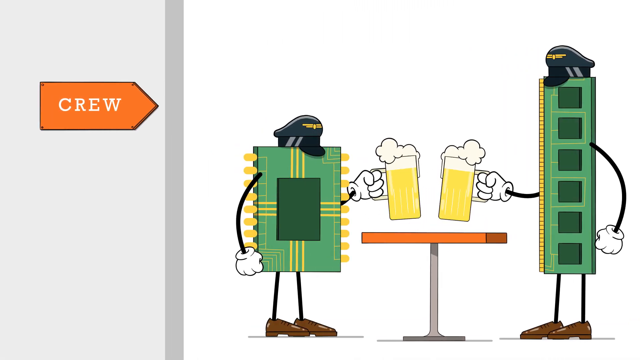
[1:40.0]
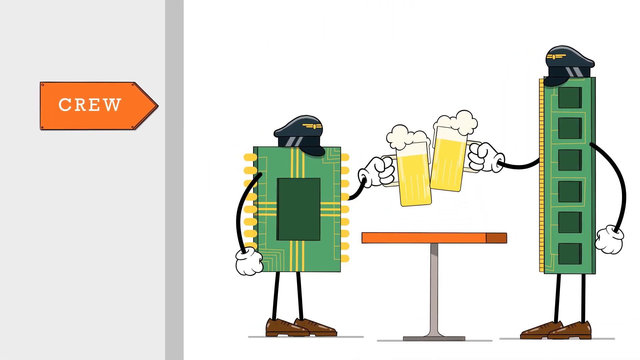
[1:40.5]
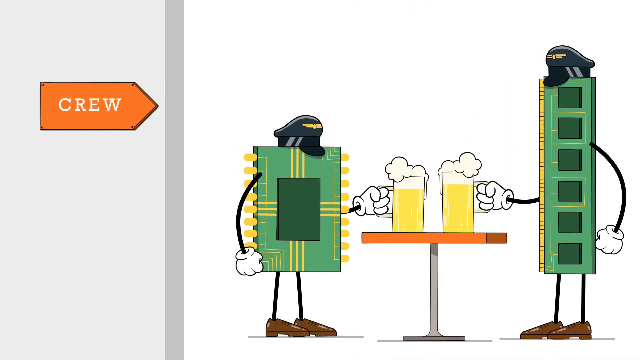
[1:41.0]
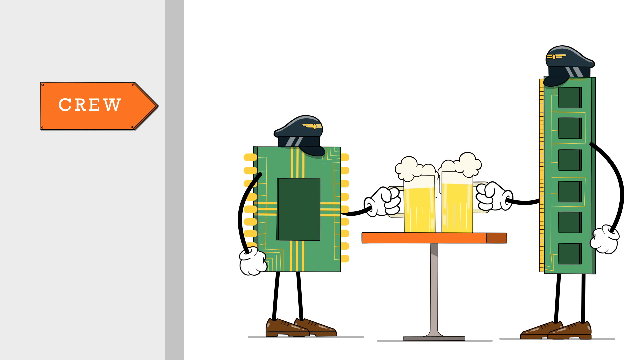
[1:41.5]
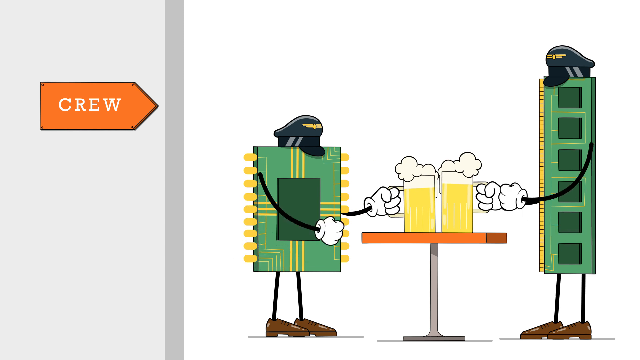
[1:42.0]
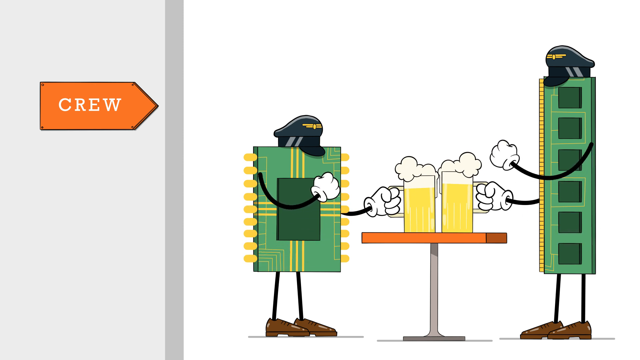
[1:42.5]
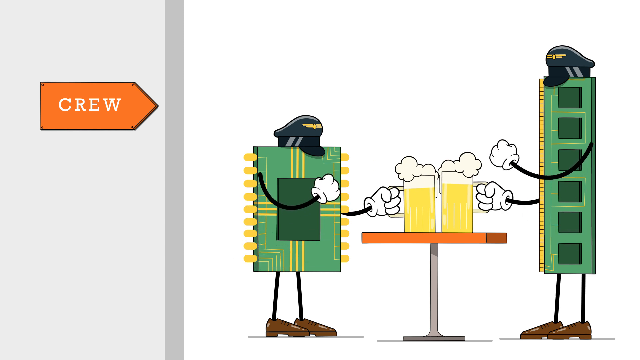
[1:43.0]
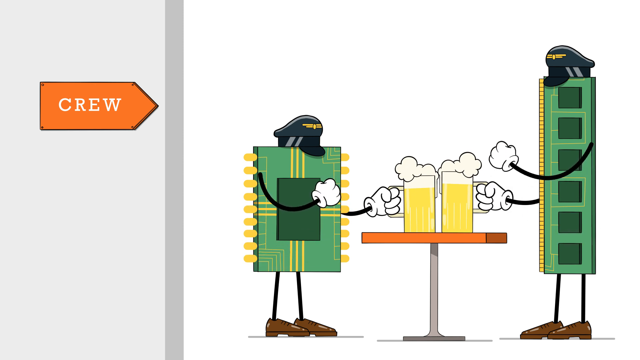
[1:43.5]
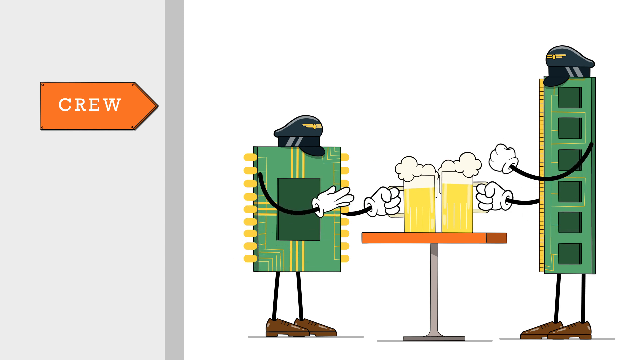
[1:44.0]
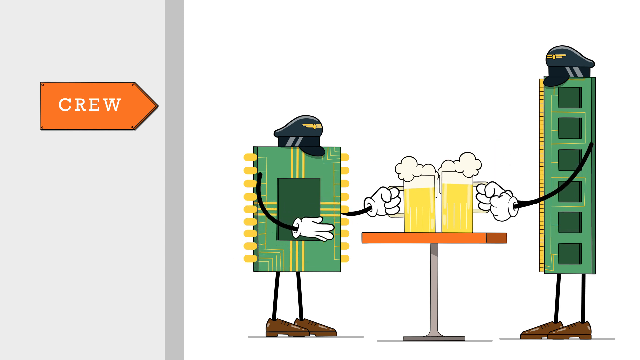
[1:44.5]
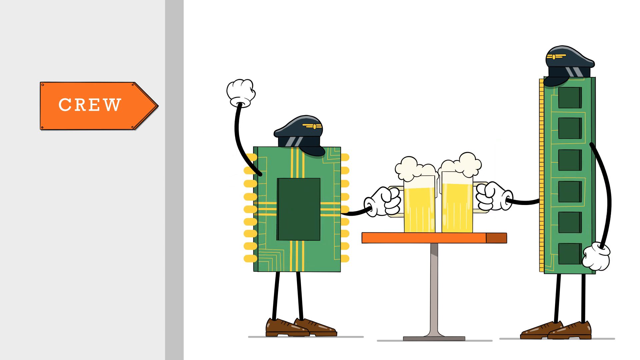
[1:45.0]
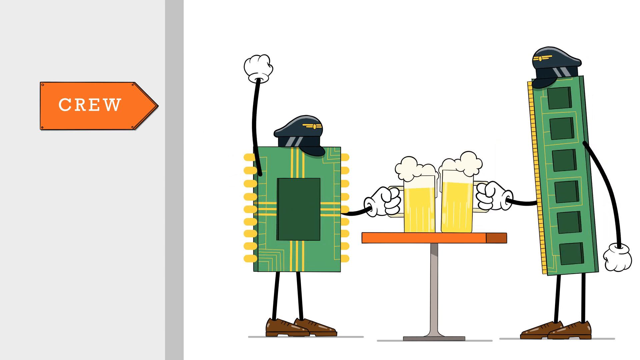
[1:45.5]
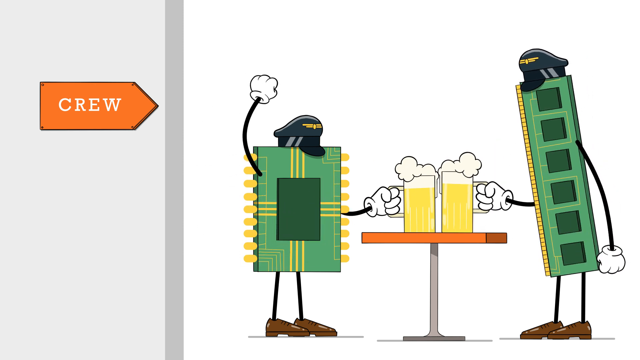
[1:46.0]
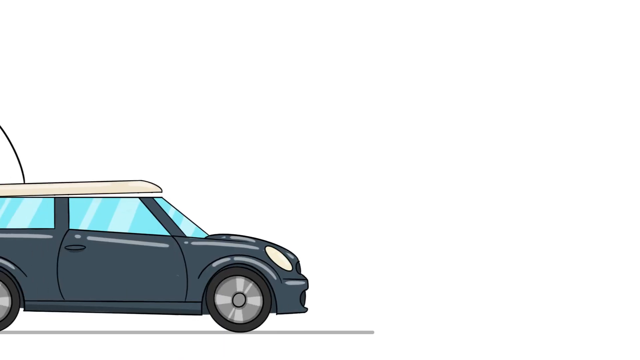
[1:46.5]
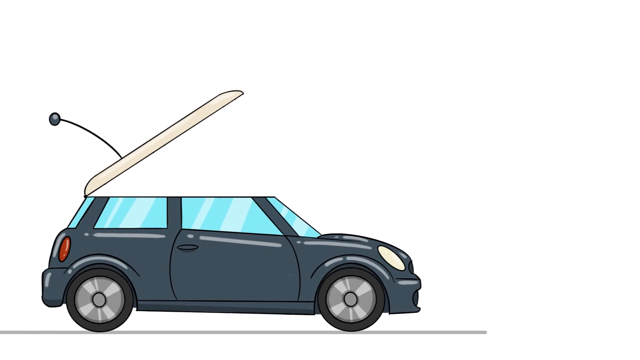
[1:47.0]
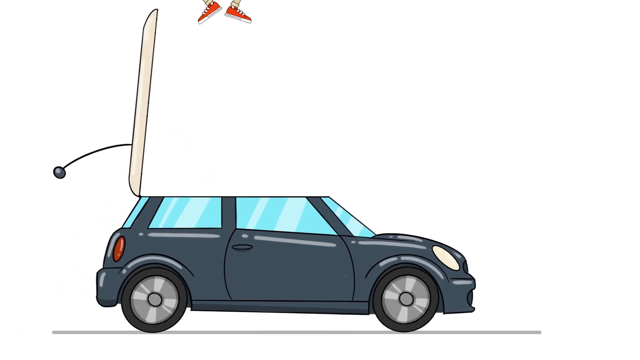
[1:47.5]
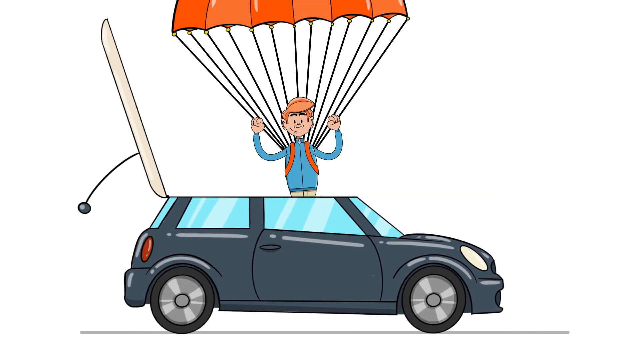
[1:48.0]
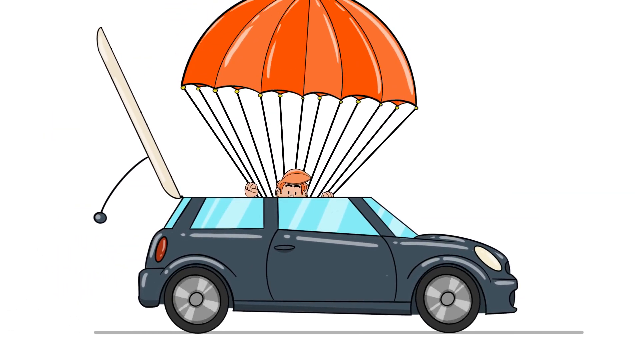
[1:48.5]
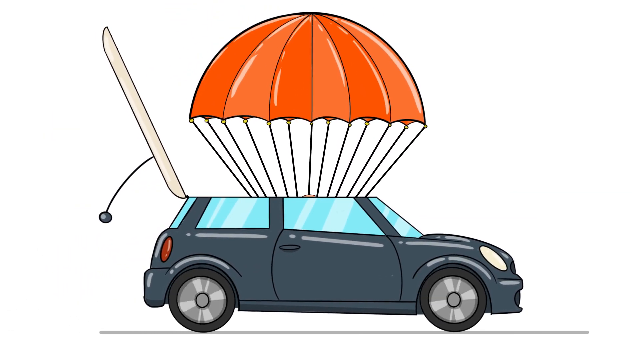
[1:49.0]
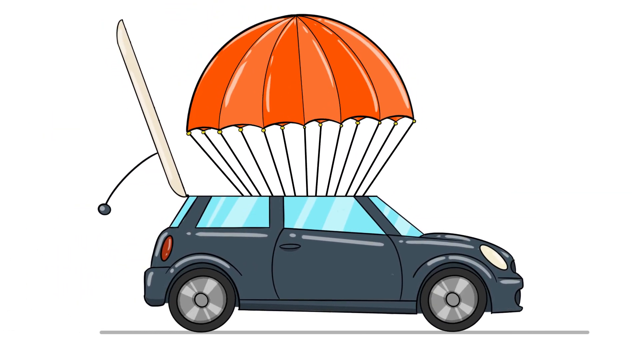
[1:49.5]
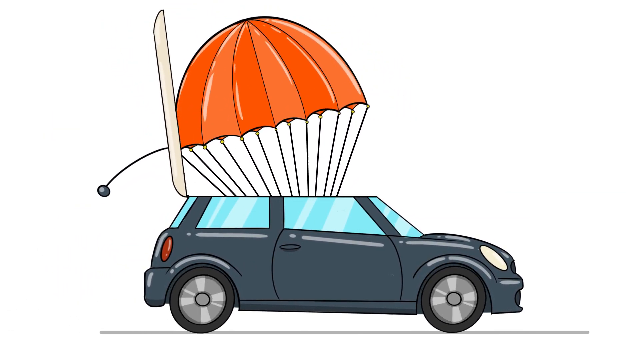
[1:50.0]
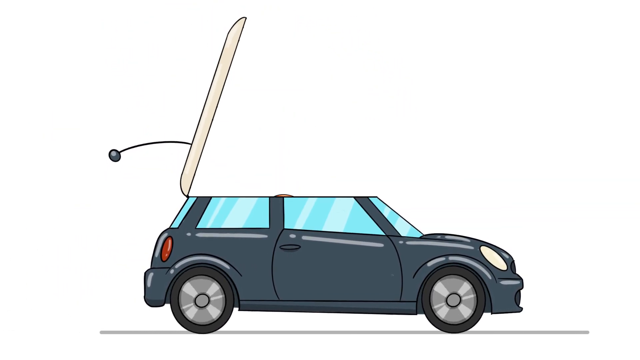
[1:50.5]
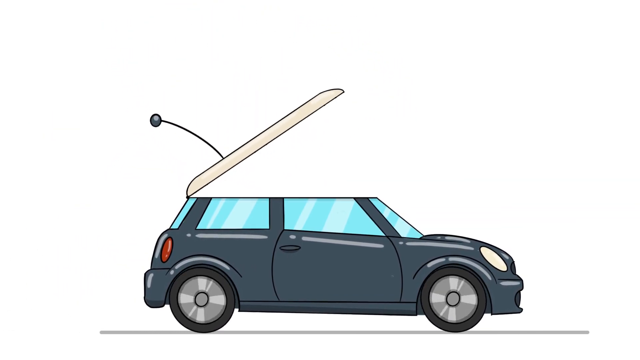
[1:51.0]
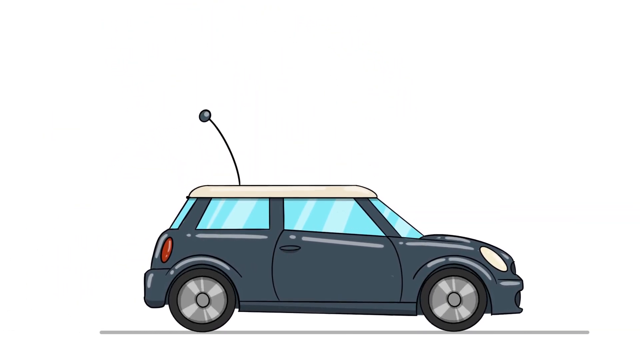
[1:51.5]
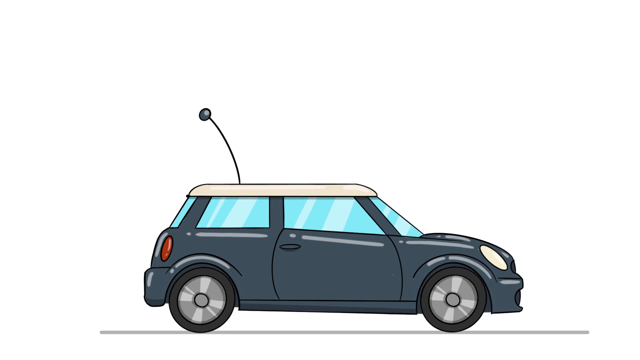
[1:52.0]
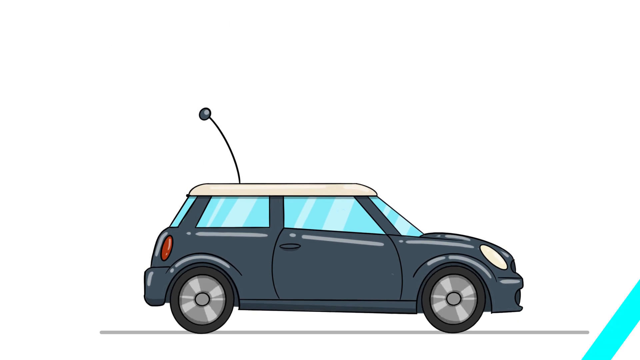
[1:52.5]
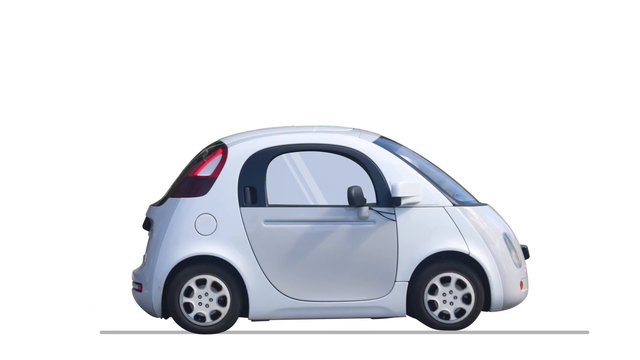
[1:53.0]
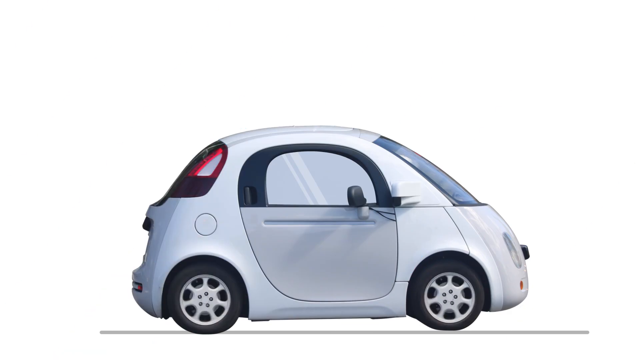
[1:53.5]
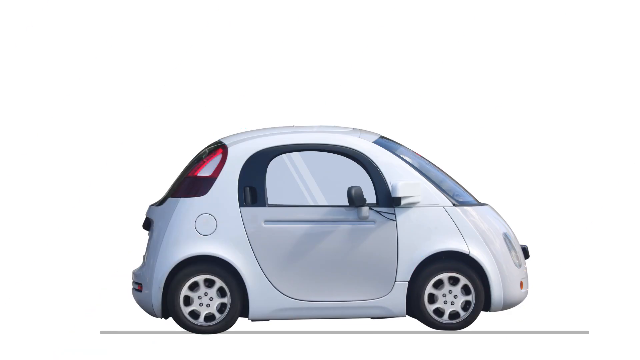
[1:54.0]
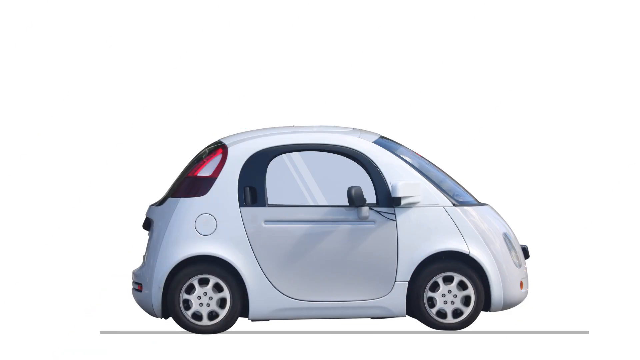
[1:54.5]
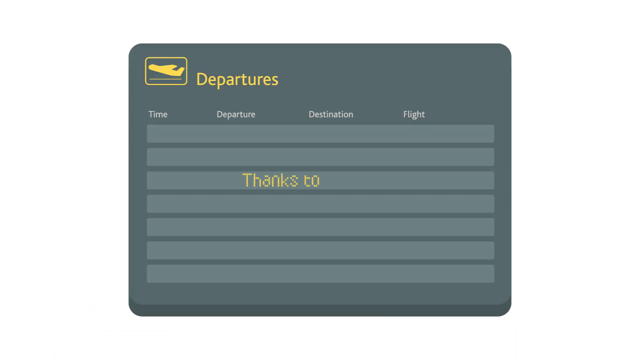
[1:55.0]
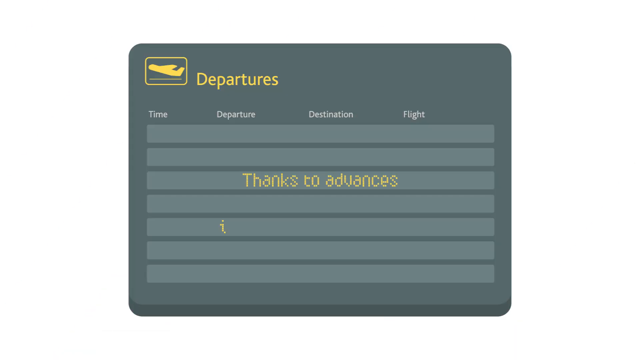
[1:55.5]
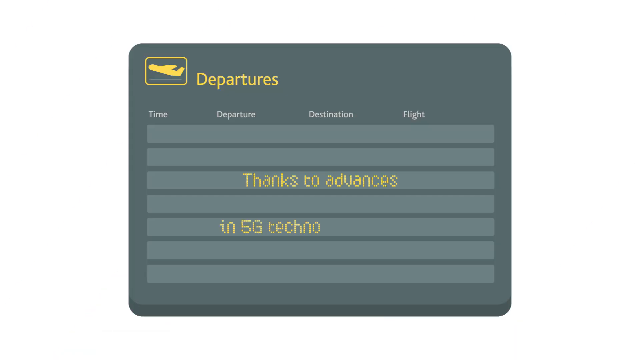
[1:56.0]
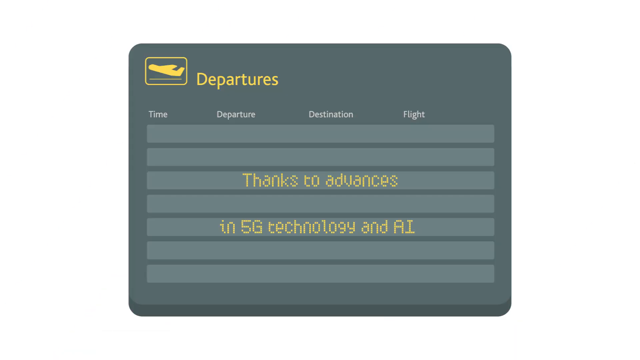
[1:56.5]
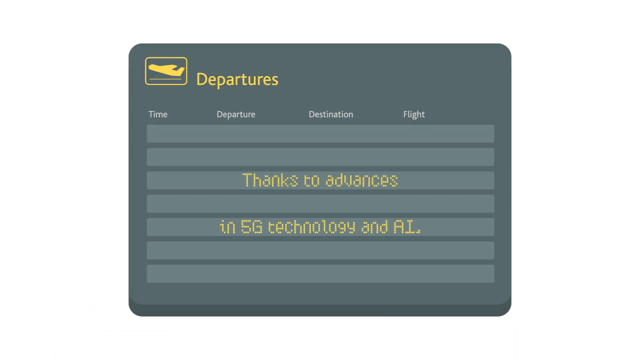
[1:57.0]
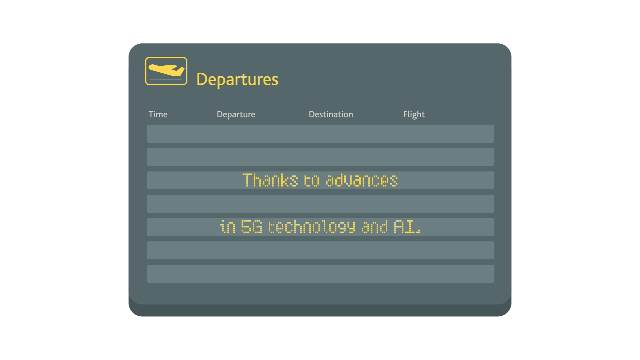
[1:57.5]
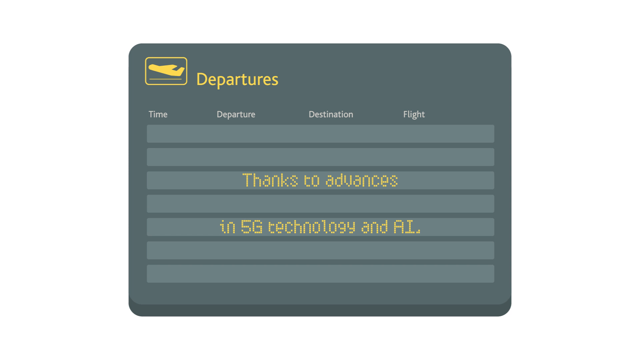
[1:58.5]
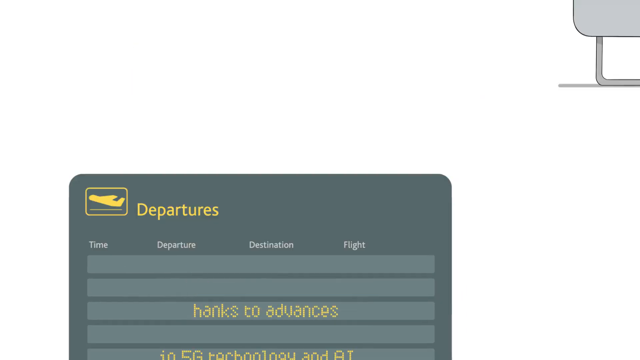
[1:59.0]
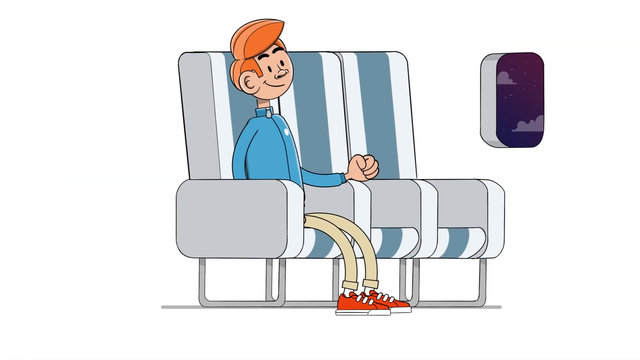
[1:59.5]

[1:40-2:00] In an animation, a gray wall on the left has an orange arrow with "crew" in it, pointing right toward the green chips. On the far right is a long horizontal green chip that appears to be a stick of RAM, with a black captain's hat on top, black arms and legs, and gloved white hands. A table is to its lower left, and to the left of the table is another chip, wider and shorter and green, with small horizontal green dashes on its sides, a black captain's hat, and the same black arms and legs and white gloves. The chip on the left holds a mug of beer with its left hand and the chip on the right holds one with its right hand; the frothy mugs are sitting on the table. With their free hands, the chips form fists and shake them up and down, looking like they are playing rock-paper-scissors: the chip on the left forms paper and the chip on the right forms rock. The chip on the left then raises its right hand in a fist, looking like it is celebrating. Next is a drawing of a blue car with a white top on a white background, looking similar to a Mini Cooper. The white top opens, and a red-headed man with a red and orange parachute parachutes into the car as it drives. The white top, which has an antenna with a round ball at the end, closes back down once the man is in. Another car drawing follows: a white car like a smart car that looks almost like an egg, with a curved top and black tires, shown from the right side and moving. A rectangular green airport departures screen follows, with areas for time, departures, destination and flights. Centered below these labels is the sentence "thanks to advances", then a space, then another sentence, "in 5g technology and AI". The scene moves to the man who parachuted into the car, with red hair, a blue shirt, tan pants and red sneakers, sitting in the aisle seat of a row of three white airplane seats with a blue stripe down the center, with the airplane window to his left.